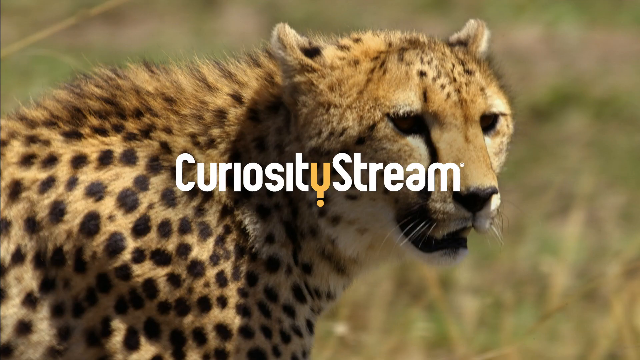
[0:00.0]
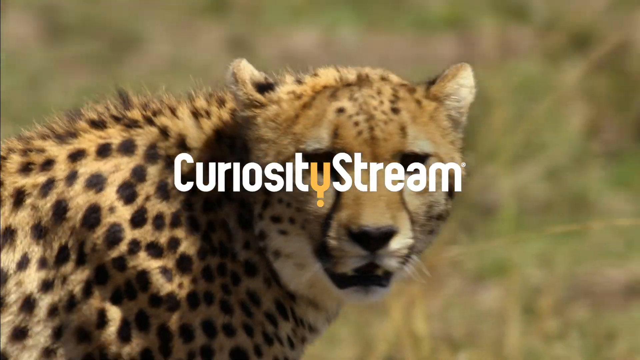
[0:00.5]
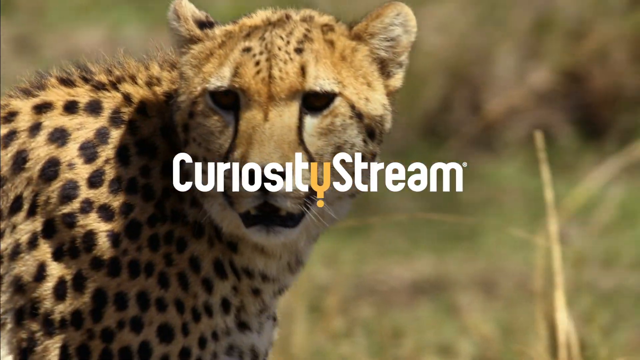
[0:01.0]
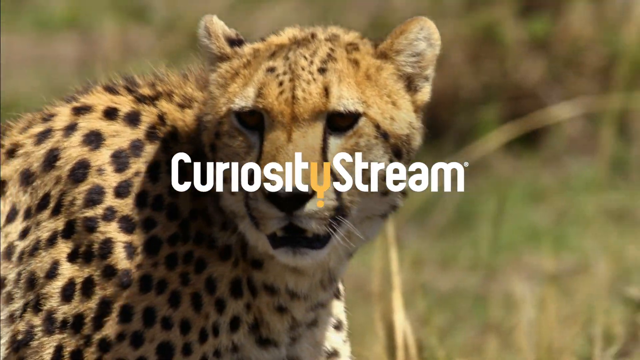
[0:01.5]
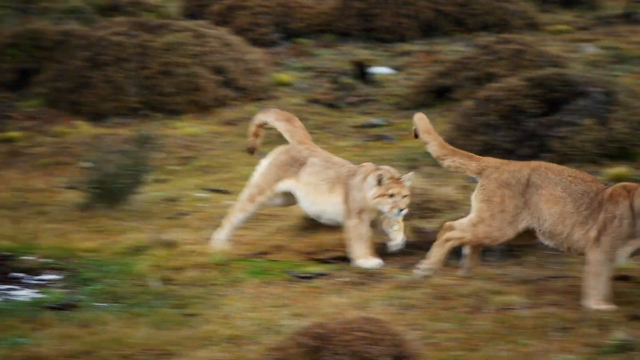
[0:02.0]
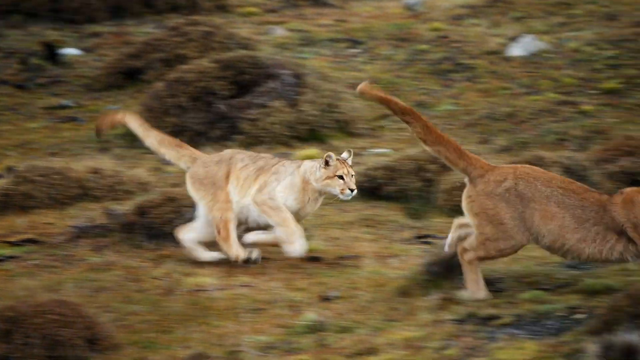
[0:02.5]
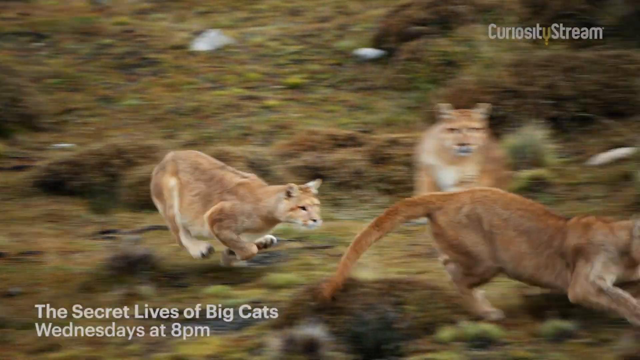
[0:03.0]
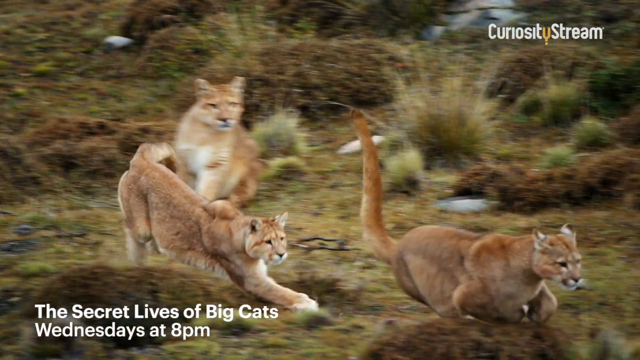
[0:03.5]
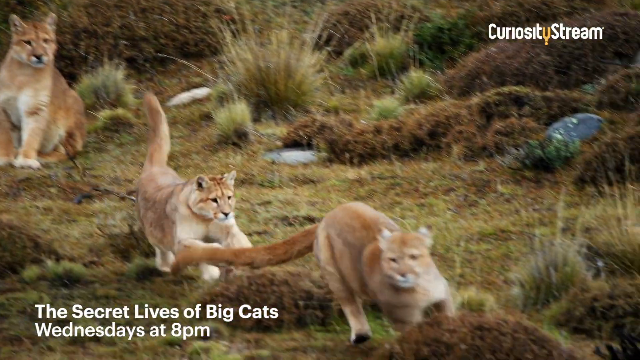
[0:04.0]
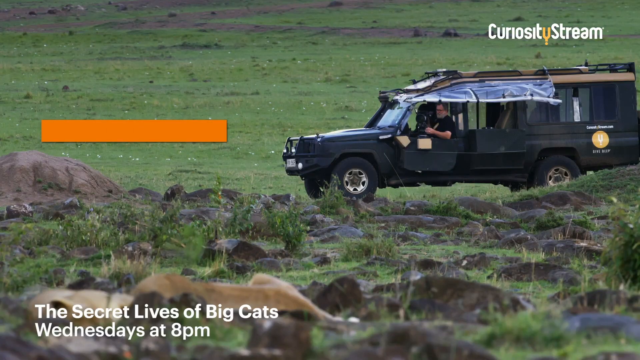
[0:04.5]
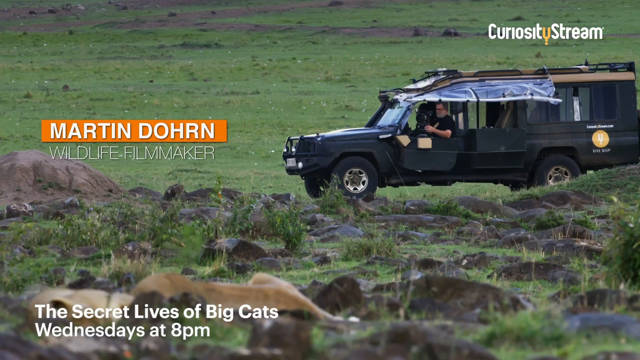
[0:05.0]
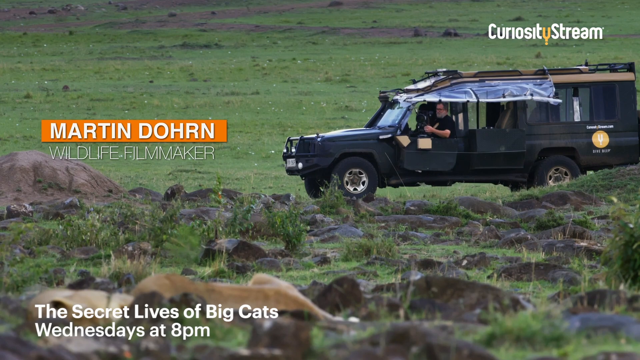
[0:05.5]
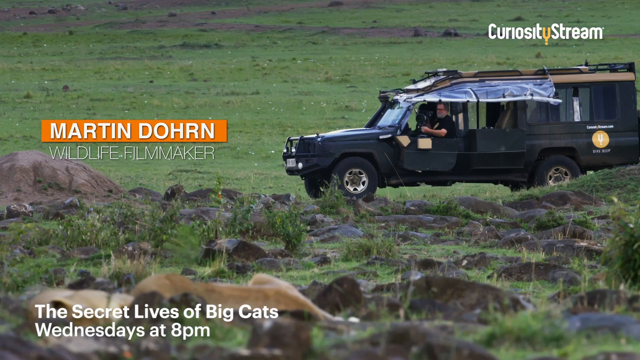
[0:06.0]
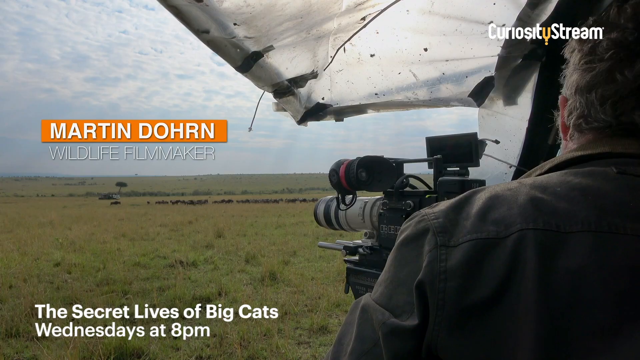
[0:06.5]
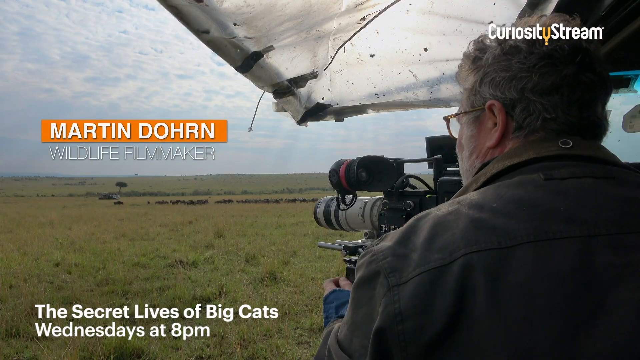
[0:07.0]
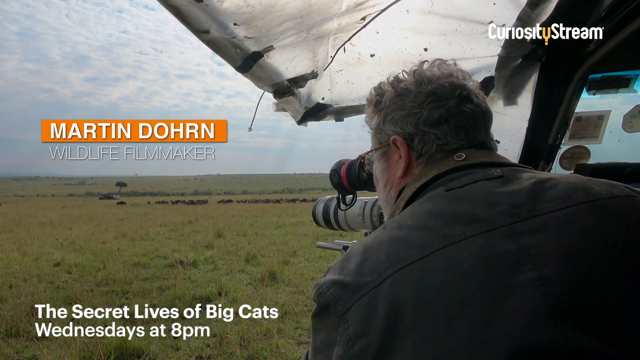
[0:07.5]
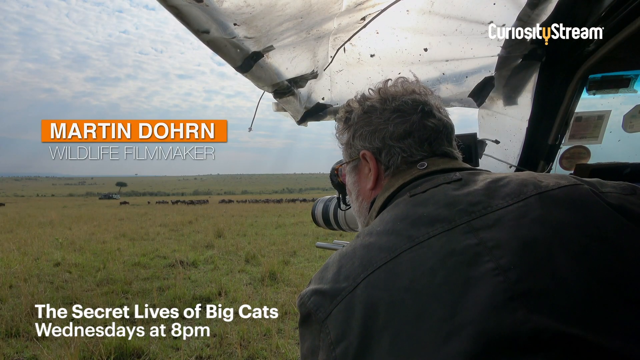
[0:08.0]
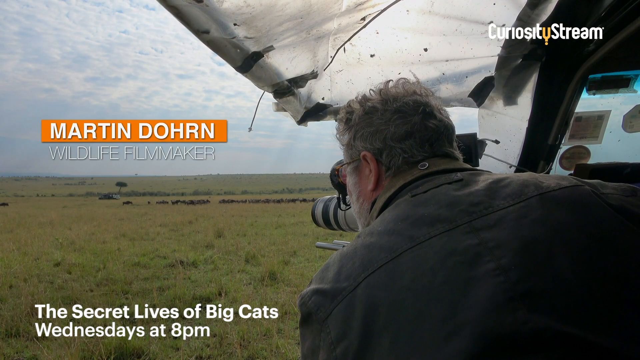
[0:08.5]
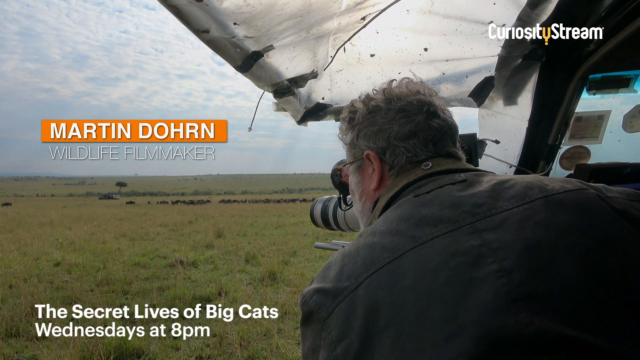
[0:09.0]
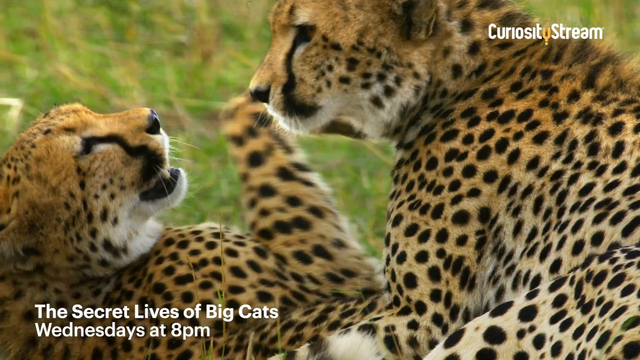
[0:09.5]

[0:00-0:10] On-screen text indicates the video is from CuriosityStream, and a spotted leopard appears. The video promotes The Secret Lives of Big Cats, airing Wednesdays at 8 p.m., showing wild big cats rather than house cats, and the cats are seen running around. Text then identifies Martin Dohrn as the wildlife filmmaker, and he is shown in a well-protected vehicle with a very expensive camera and a special umbrella. He is sitting further back, behind all of the action.